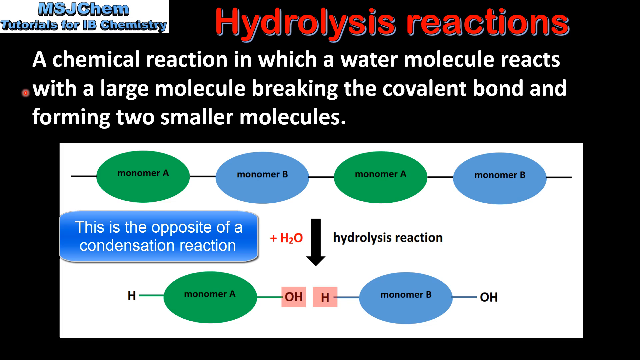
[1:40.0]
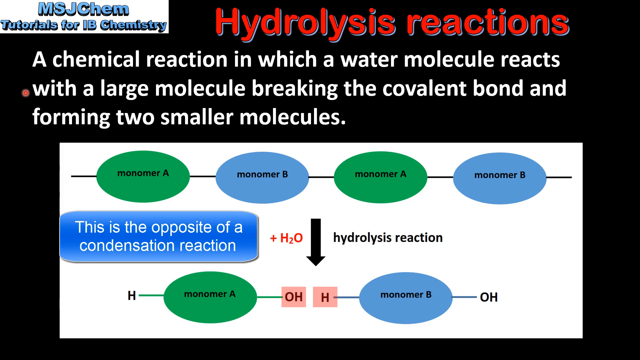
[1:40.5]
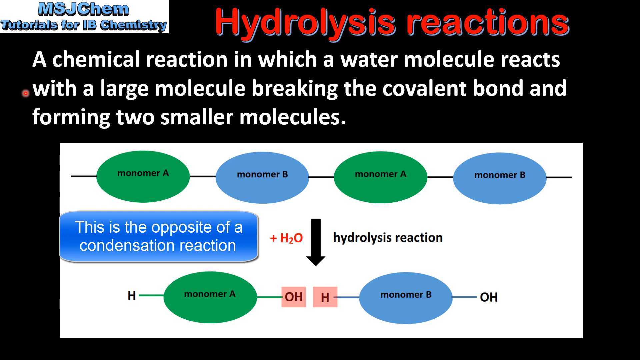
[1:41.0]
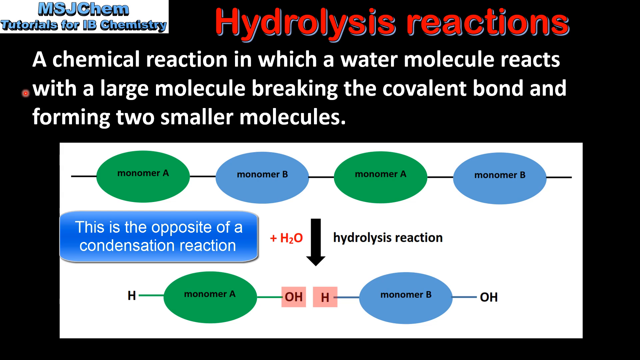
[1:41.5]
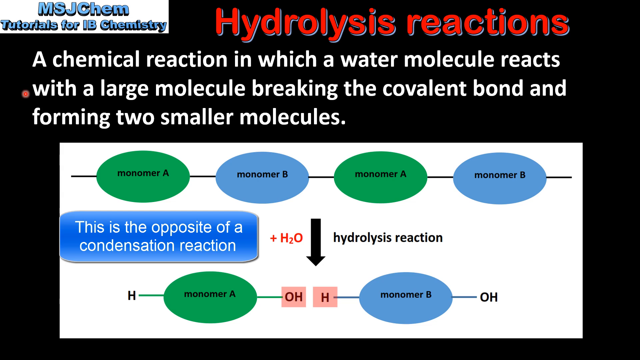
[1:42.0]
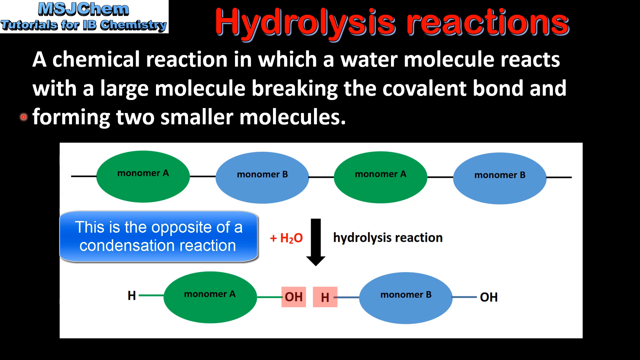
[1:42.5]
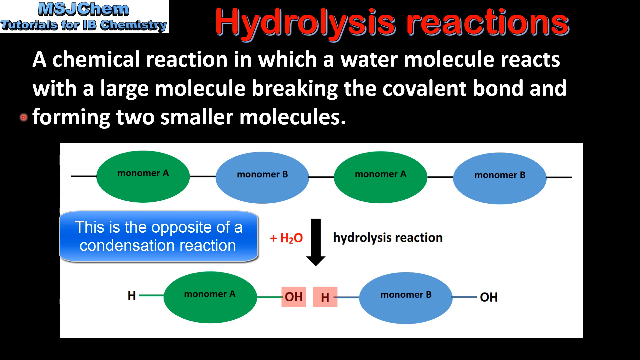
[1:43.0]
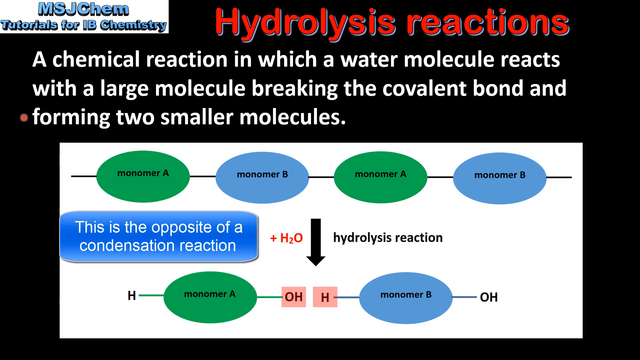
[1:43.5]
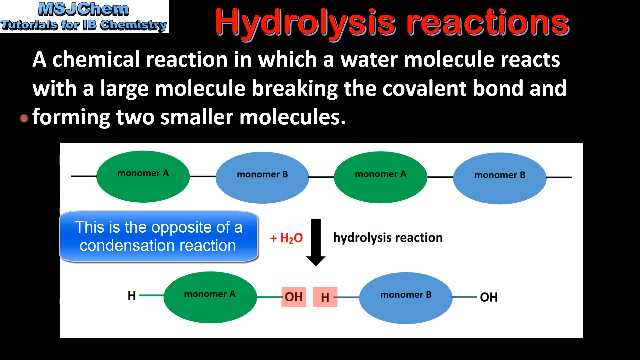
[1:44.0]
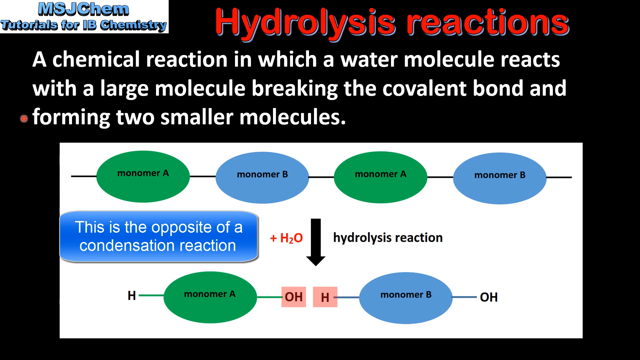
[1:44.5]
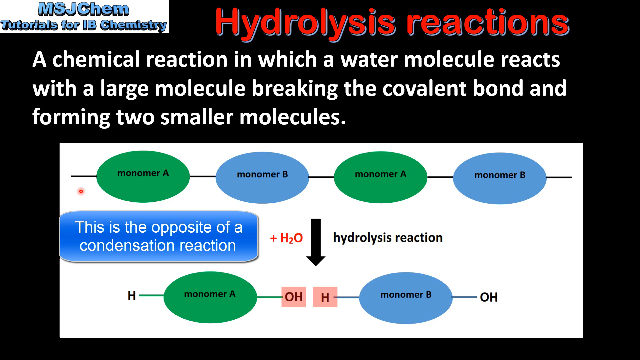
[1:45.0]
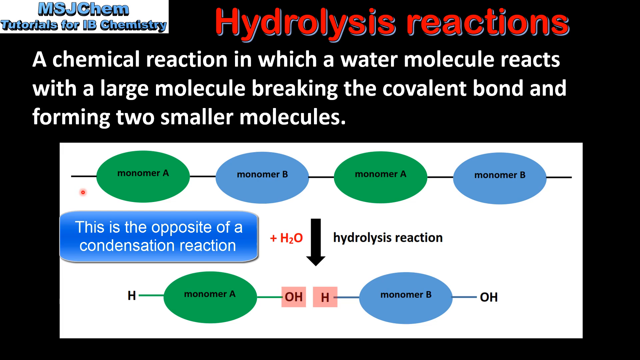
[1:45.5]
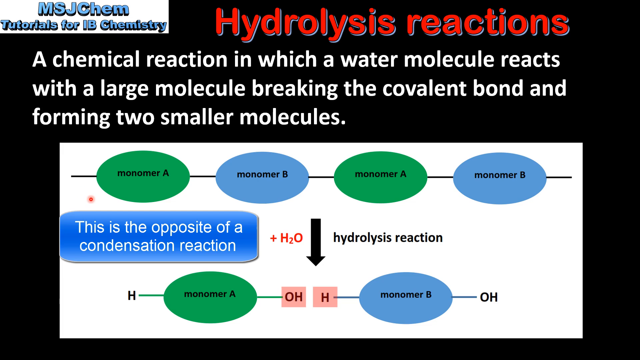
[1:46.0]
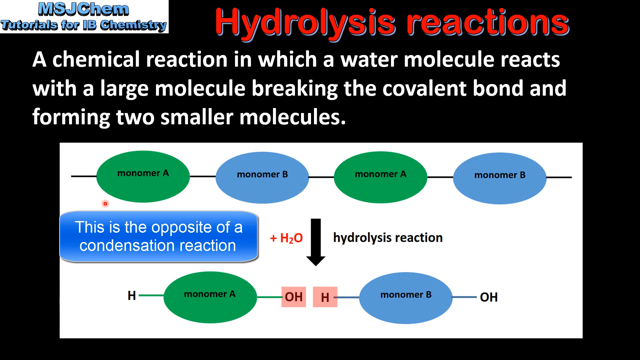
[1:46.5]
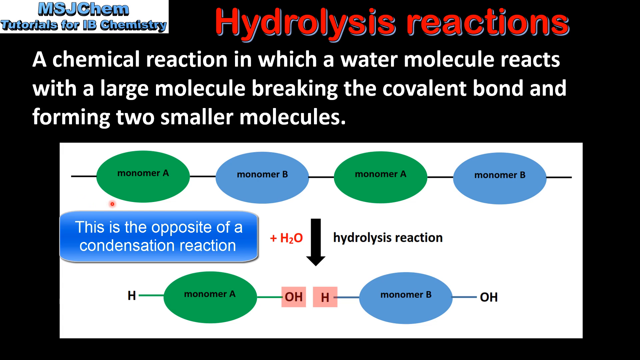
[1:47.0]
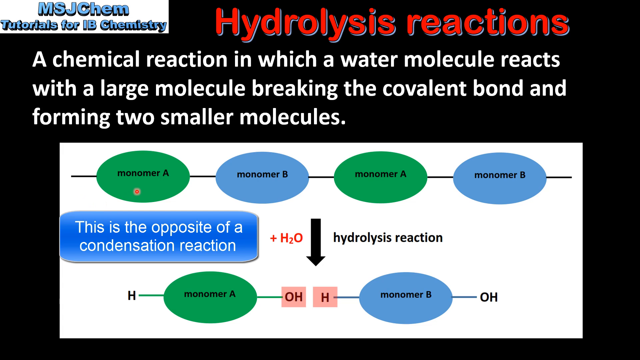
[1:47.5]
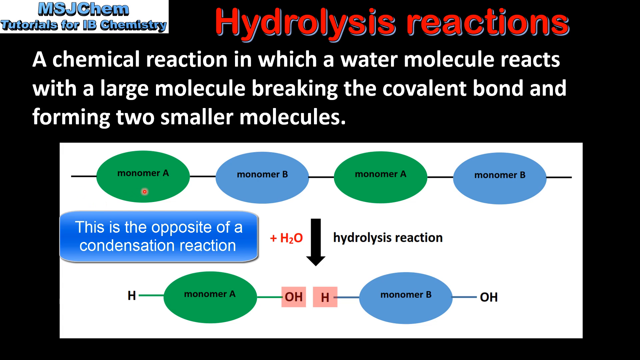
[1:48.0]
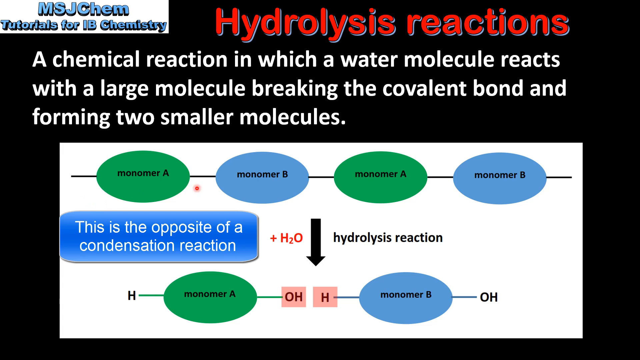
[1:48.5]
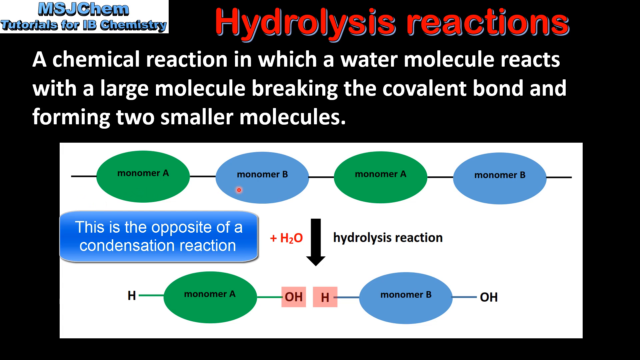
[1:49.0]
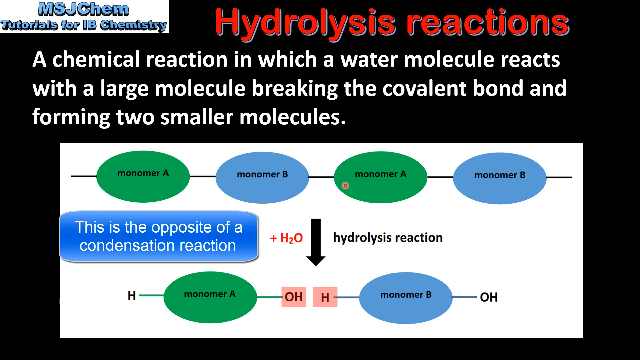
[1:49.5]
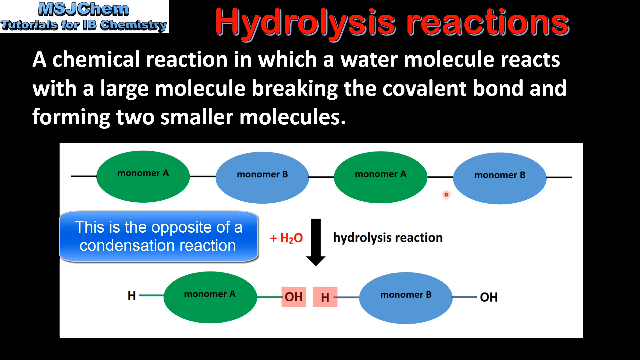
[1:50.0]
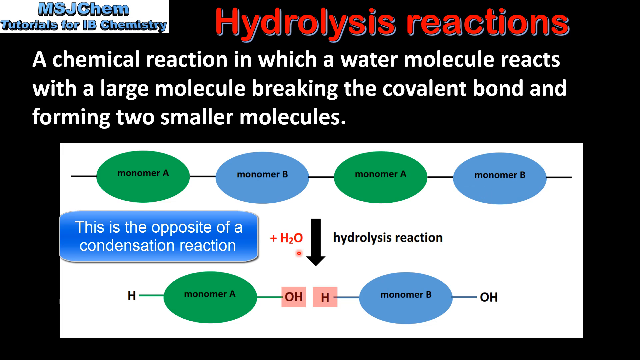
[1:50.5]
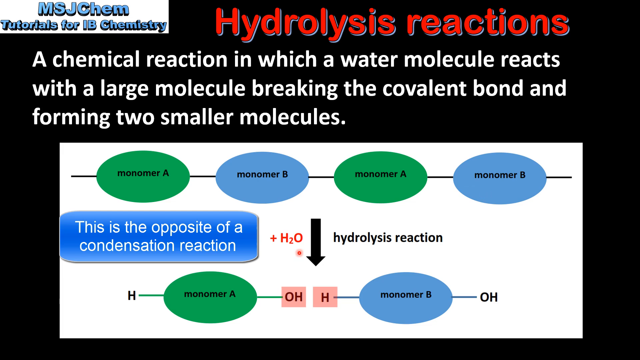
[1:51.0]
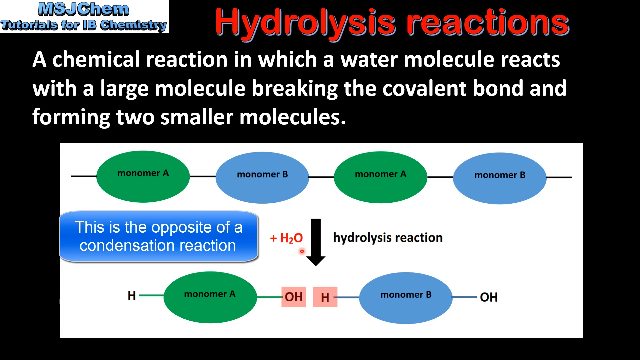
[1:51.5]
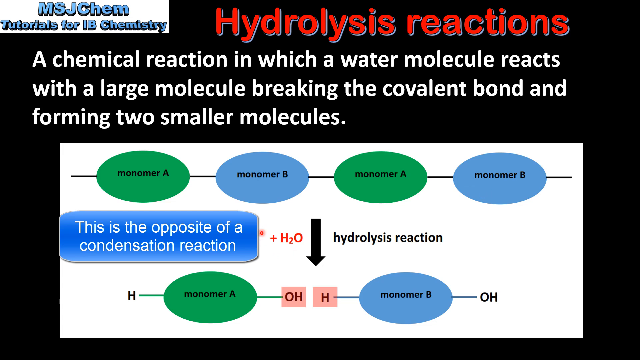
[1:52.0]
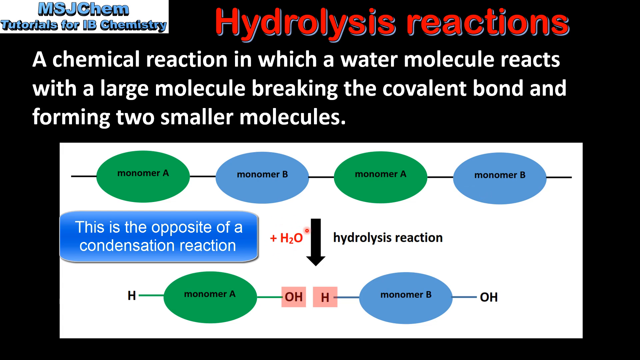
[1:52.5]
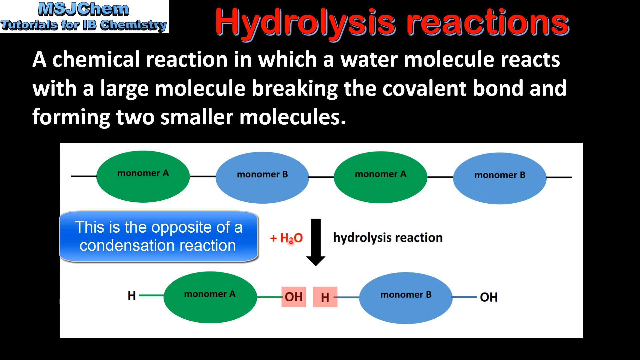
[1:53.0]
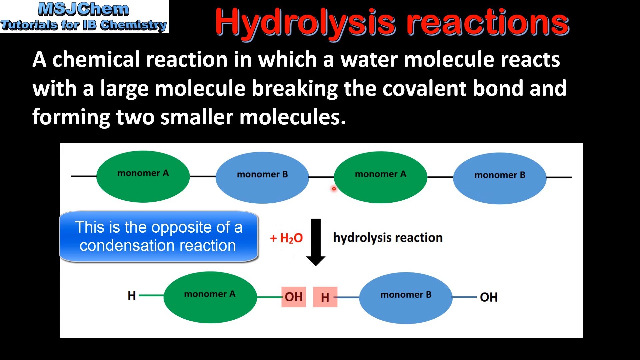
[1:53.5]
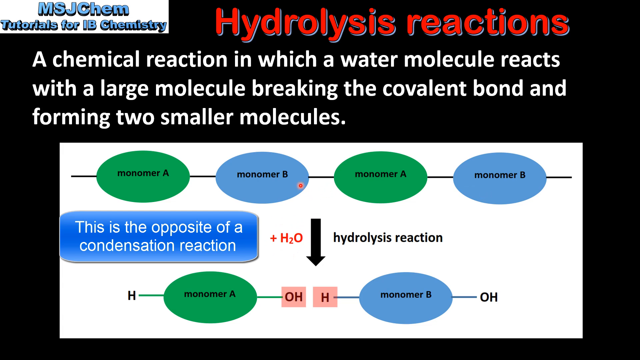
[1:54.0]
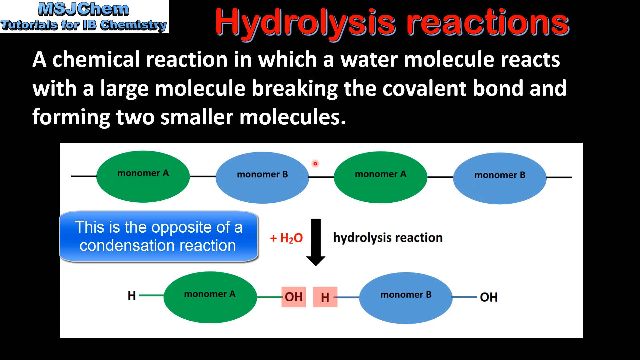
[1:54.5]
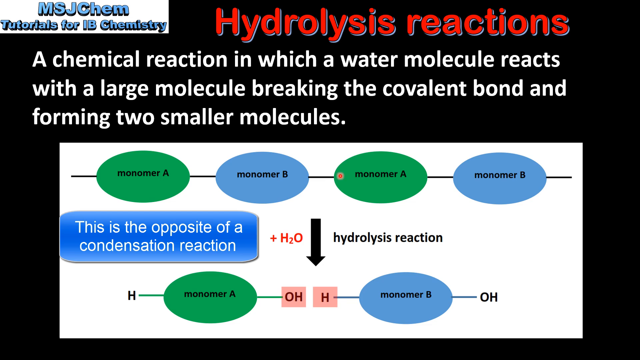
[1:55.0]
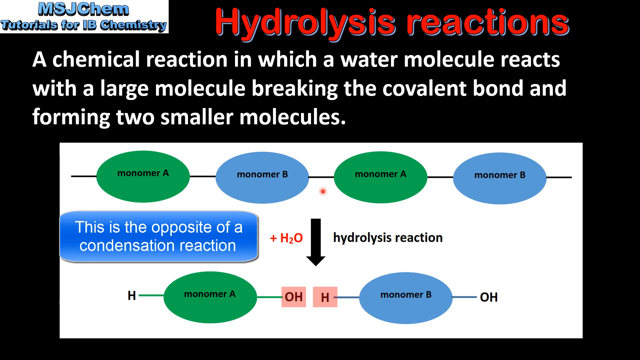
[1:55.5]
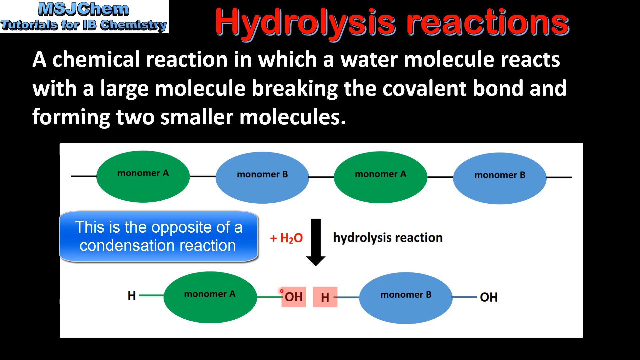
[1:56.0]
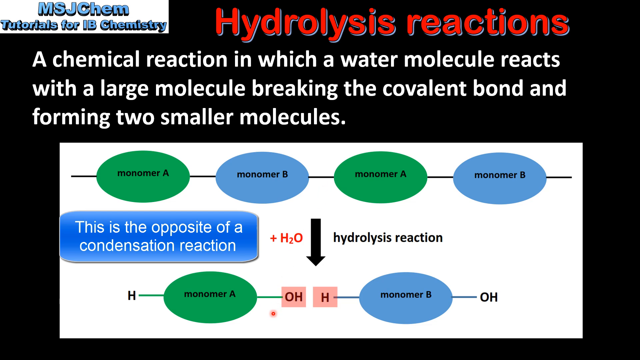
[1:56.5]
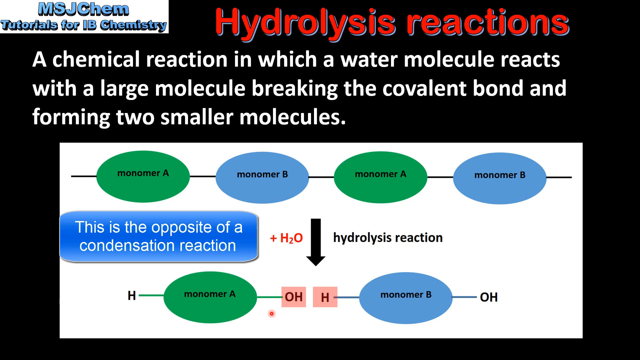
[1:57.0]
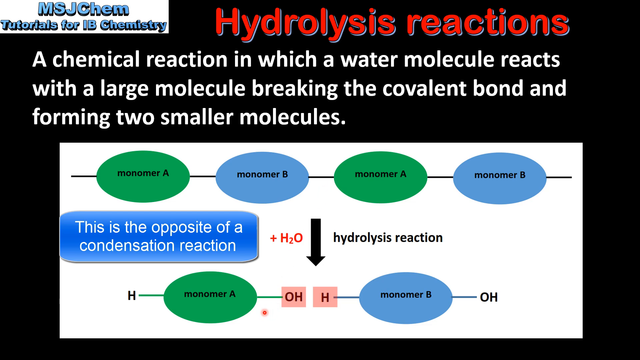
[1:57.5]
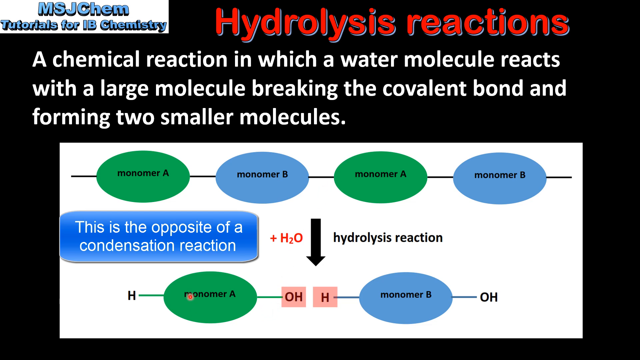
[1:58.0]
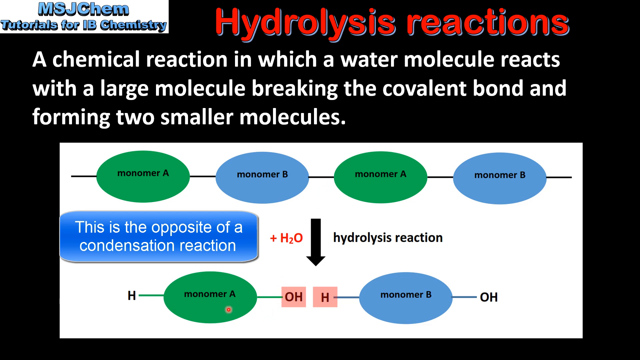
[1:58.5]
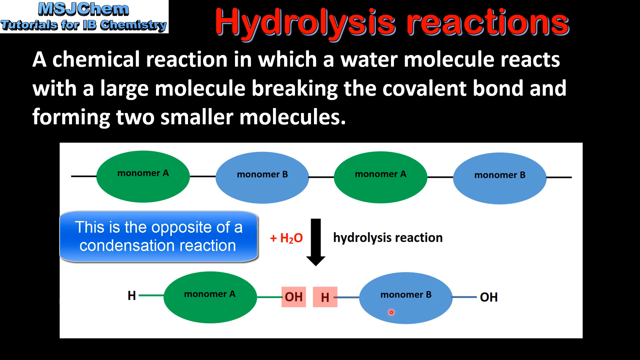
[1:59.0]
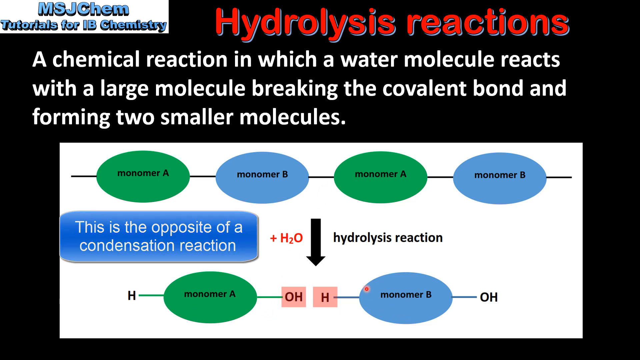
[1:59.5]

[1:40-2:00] On a black background, red text at the top reads "hydrolysis reactions," and a white banner with blue text reads "MSJ Chem Tutorials for IB Chemistry." A white paragraph reads "a chemical reaction in which a water molecule reacts with a large molecule, breaking the covalent bond and forming two smaller molecules." A white banner box has green and blue circles labeled in black text "monomer A, monomer B, monomer A, monomer B, monomer A, and monomer B." A blue box with white text reads "this is the opposite of a condensation reaction." A black arrow points to two pink boxes reading "OH" and "H," with the arrow's label reading "plus H2O hydrolysis reaction." A small red circle cursor moves on the screen, pointing to different elements of the page, and the banner text "this is the opposite of a condensation reaction" slowly fades out.